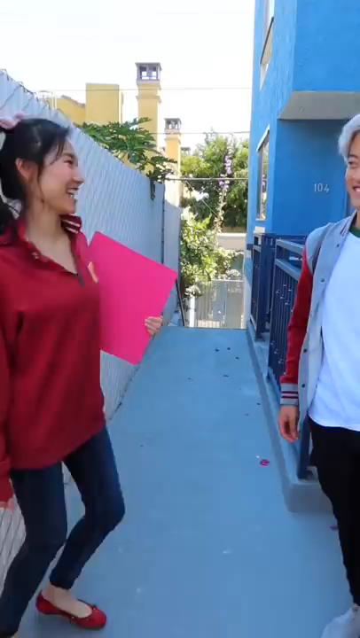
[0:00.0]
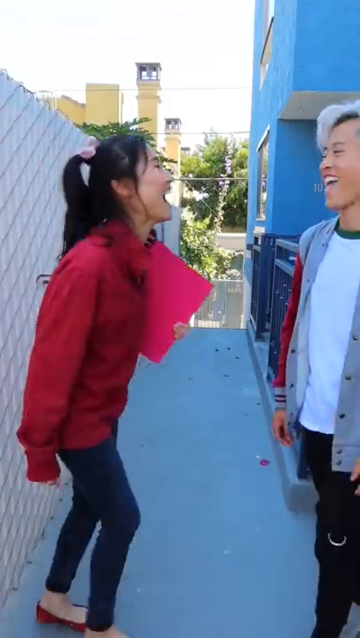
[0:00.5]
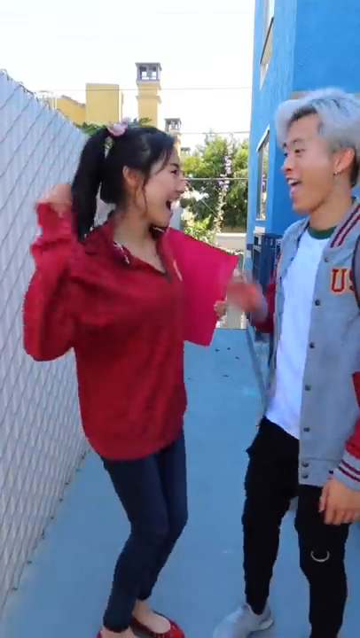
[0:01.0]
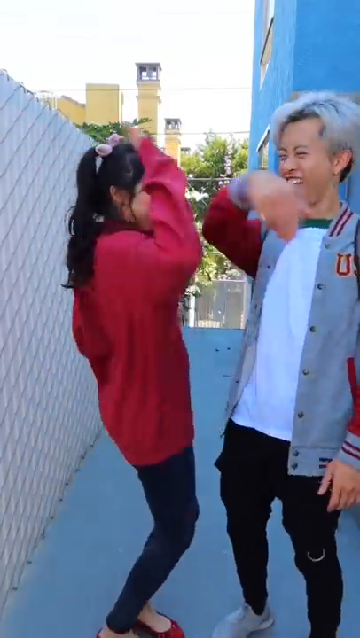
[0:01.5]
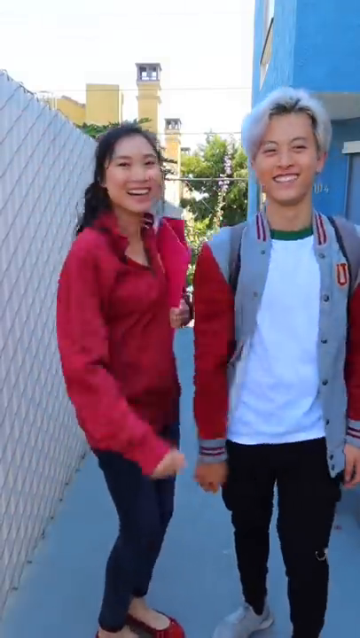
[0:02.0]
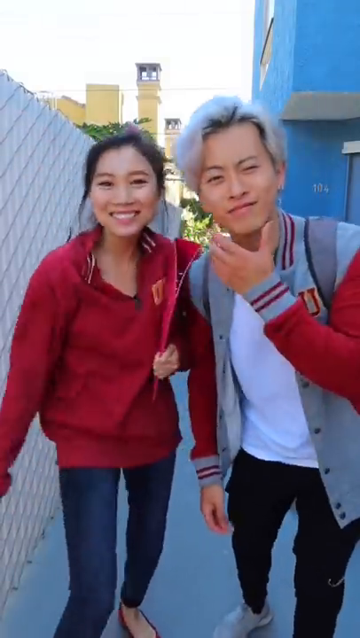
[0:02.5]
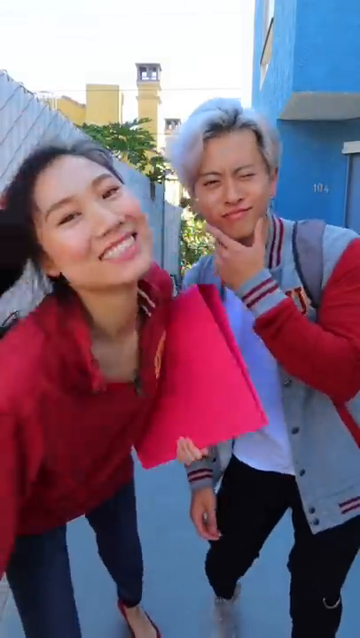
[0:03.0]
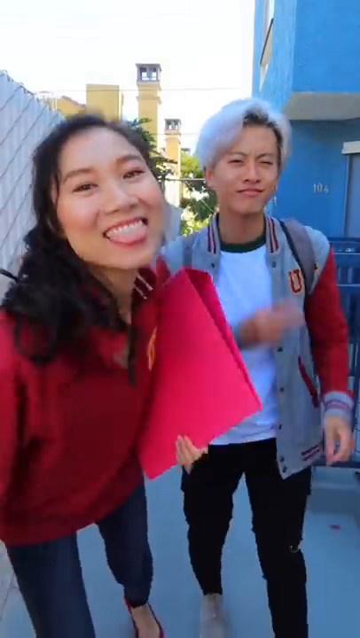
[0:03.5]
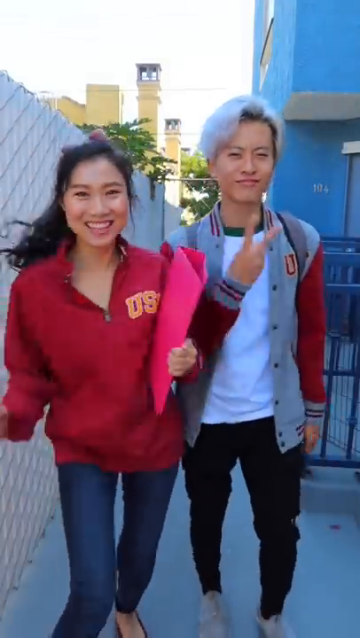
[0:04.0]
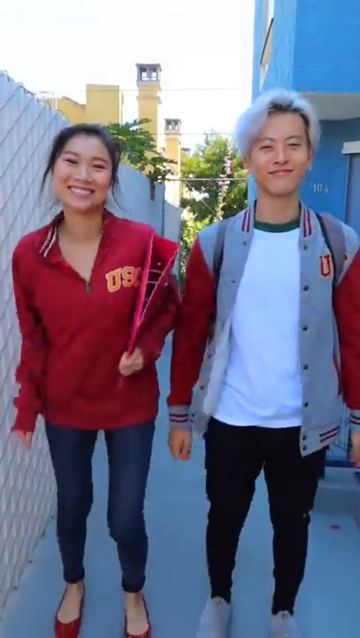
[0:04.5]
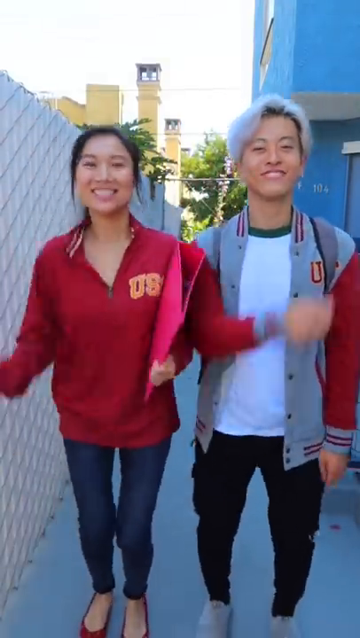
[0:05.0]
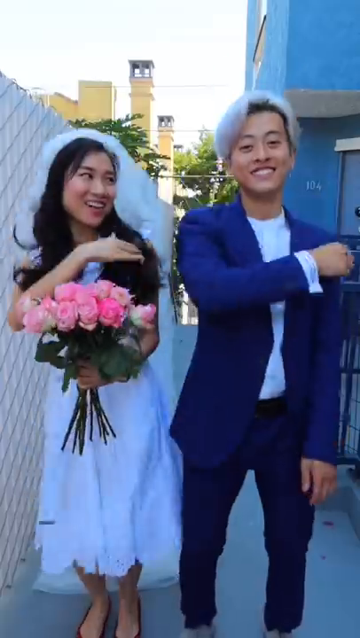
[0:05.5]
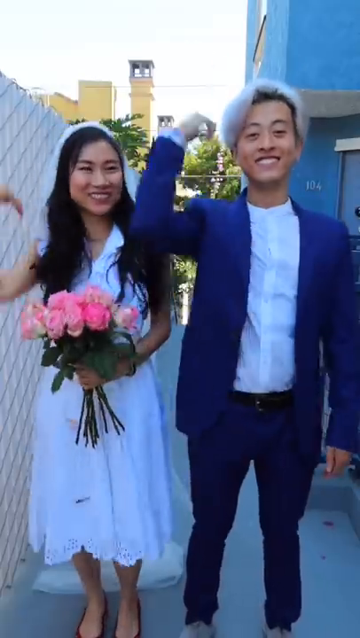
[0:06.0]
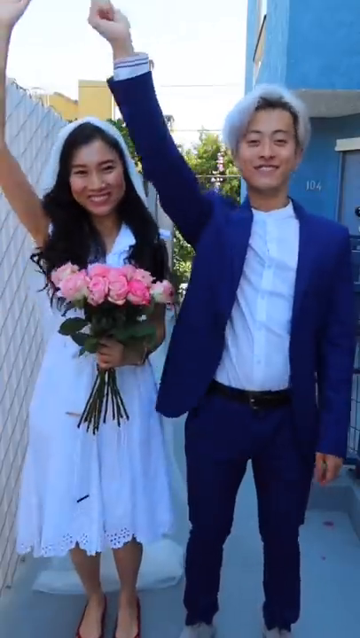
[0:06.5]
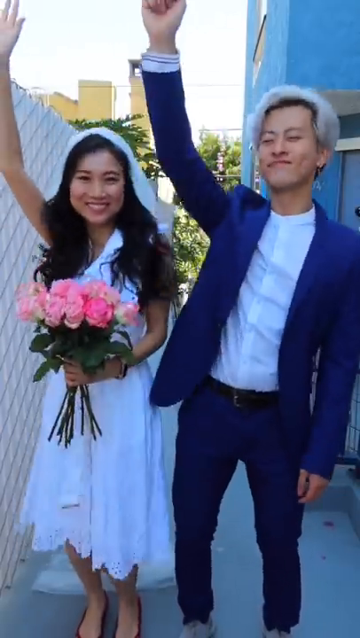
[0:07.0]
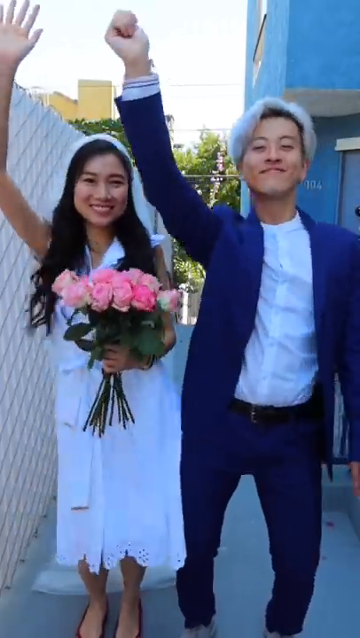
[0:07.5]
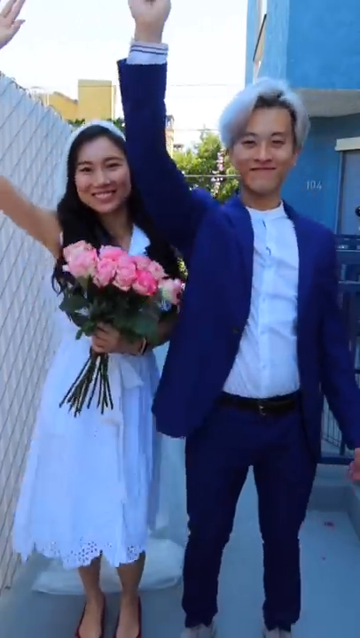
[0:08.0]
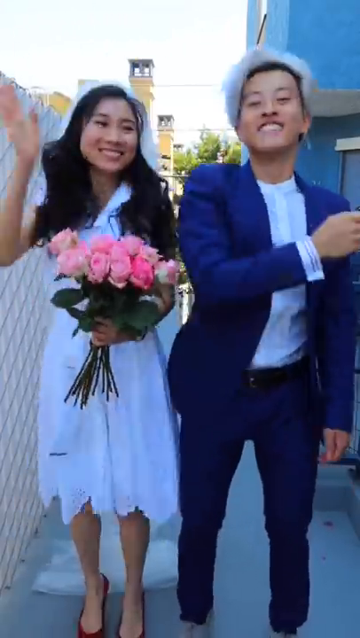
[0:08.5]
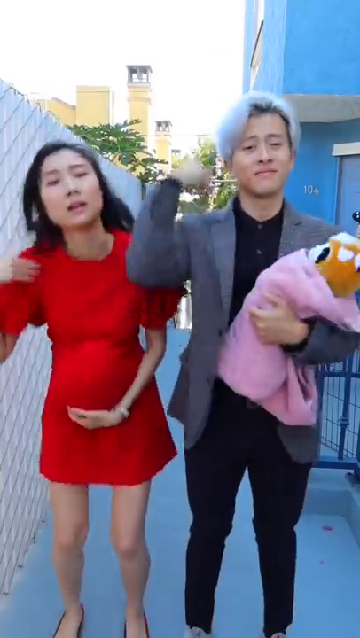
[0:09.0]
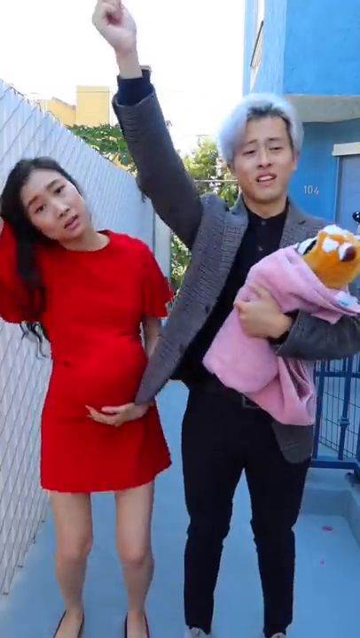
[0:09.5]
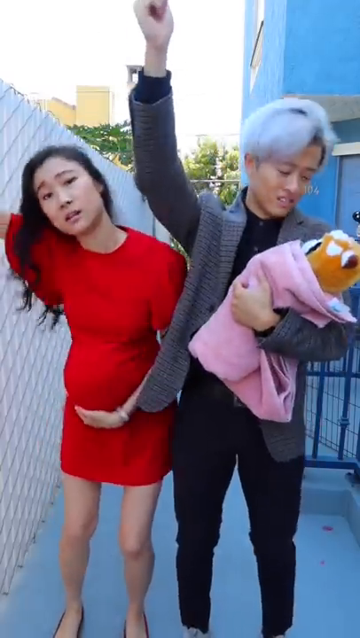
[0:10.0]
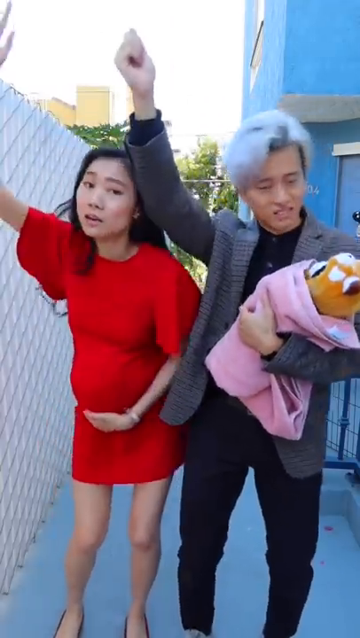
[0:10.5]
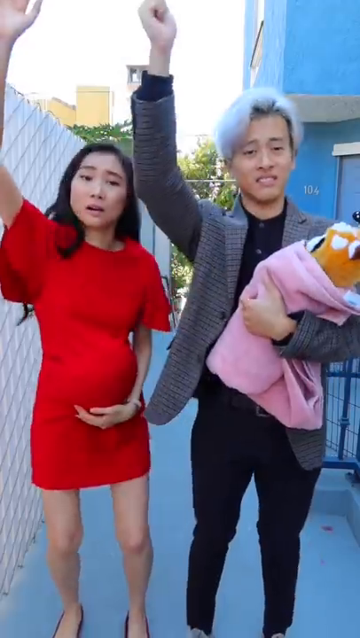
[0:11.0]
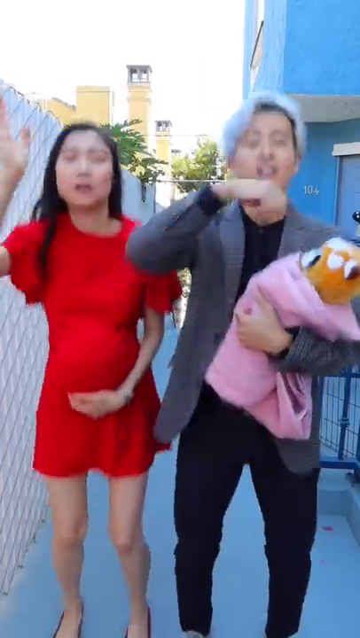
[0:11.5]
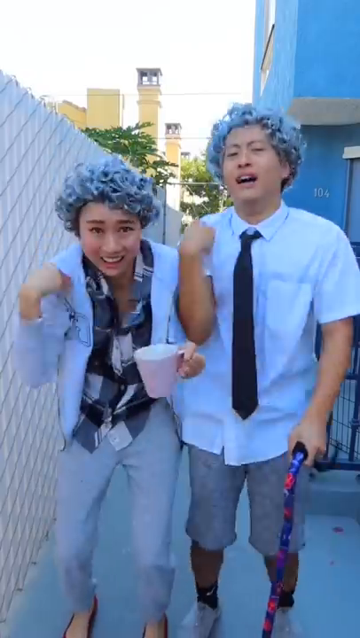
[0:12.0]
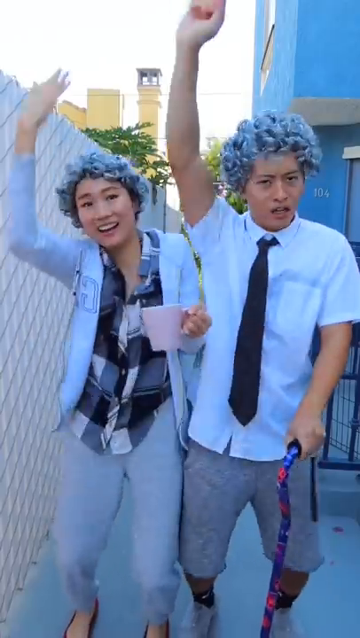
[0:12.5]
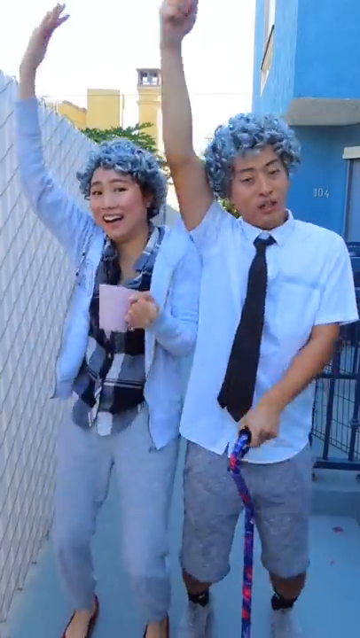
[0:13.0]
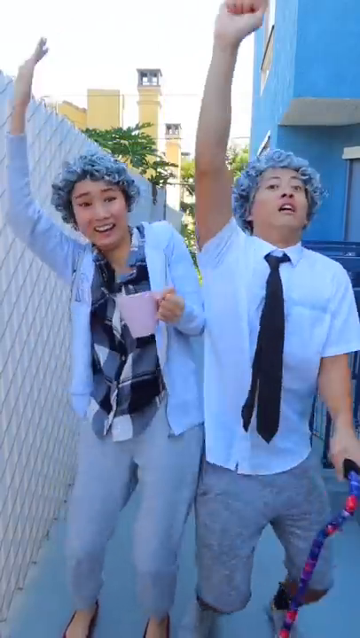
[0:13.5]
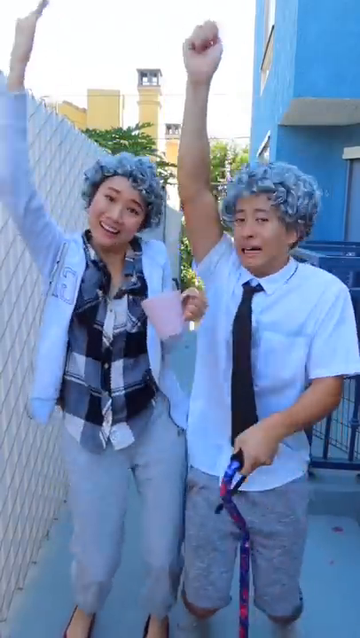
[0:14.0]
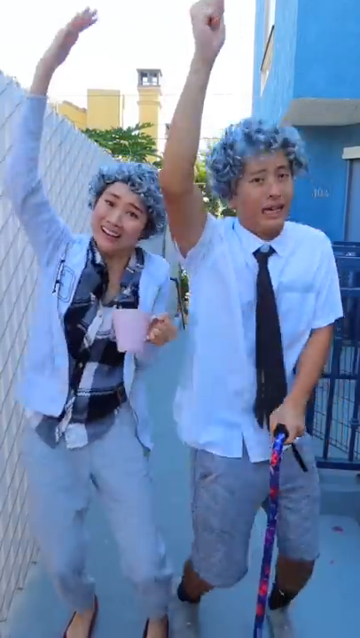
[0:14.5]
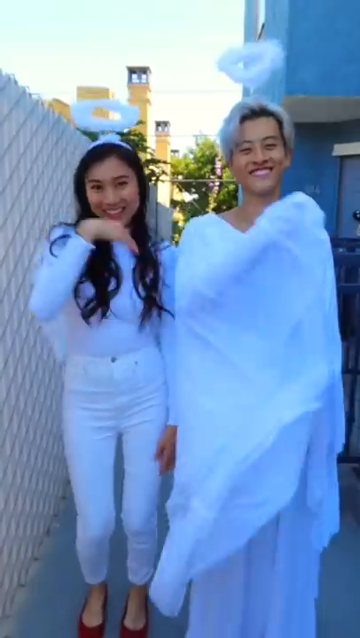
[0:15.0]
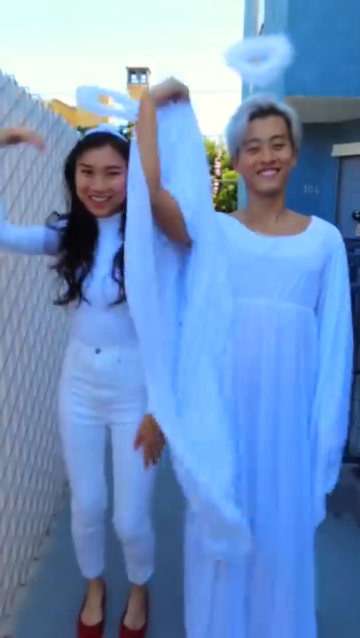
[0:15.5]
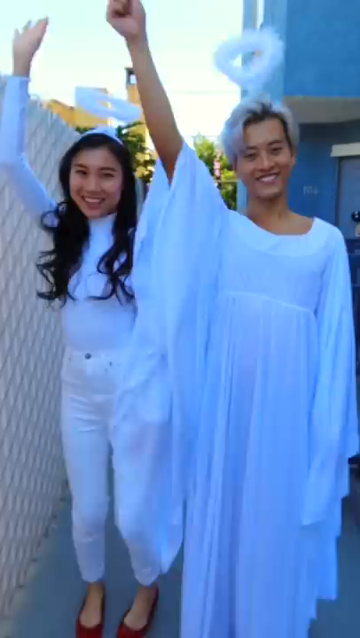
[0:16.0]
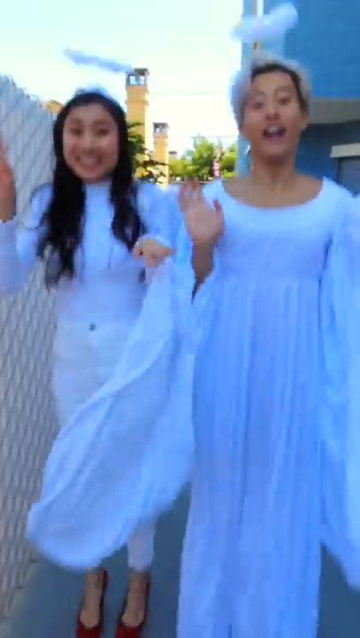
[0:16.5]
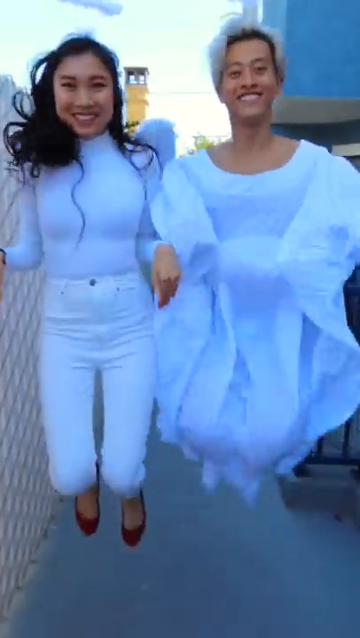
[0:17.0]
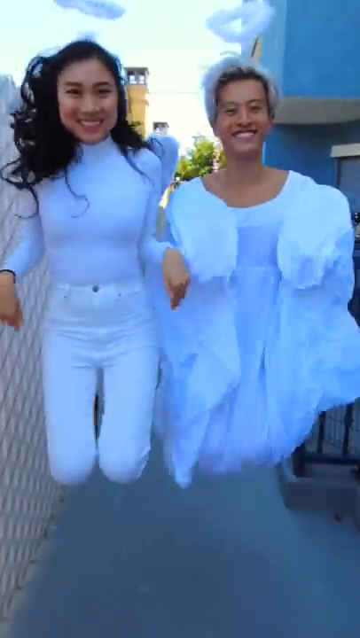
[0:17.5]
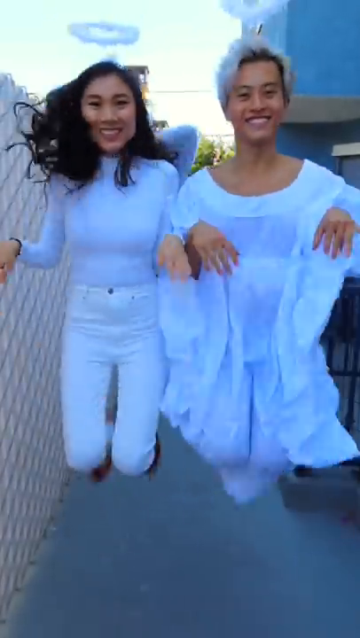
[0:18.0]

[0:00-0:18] What looks to be a social media trend video features a young couple who appear to be of Asian descent, in their late teens or early 20s. The girl has black hair tied in a black ponytail and wears a red sweater with dark blue skinny jeans. The male wears a white shirt with what looks like a gray letterman's jacket and black skinny pants, and has something like a mushroom haircut dyed silver. They start by giving each other a high five, then both do a little shimmy dance, then cross their arms over their chests and jump. The scene changes: the girl is in a white wedding dress and the guy is in a blue suit with a white button-down shirt, and it looks like they are getting married. They are sort of standing there, do a little dance with their hands up in the air, and then cross their arm over the shoulder again. They change clothing: the woman now wears a red dress with short sleeves that comes above her knee, and she appears to be pregnant, holding her stomach. The guy wears a gray suit jacket with a black button-down shirt and black skinny jeans, and seems to be holding in his arm a stuffed animal that looks like a brown fox, wrapped in what looks like a pink blanket. They do a little dance with one arm in the air and then cross their arm over their shoulder again. The scene changes to them dressed as an elderly couple. The woman has on what looks like a black and gray flannel shirt with a little denim open button-down and gray sweatpants. The guy has on a white short-sleeve button-down shirt and a black tie, and both wear wigs like elderly people. They do a little dance and cross their arm again. In the final scene they are dressed like angels, all in white, with what looks like a little halo above their heads. They jump in the air and seem to be sort of flapping their arms and flying, apparently as if they have died and become angels.